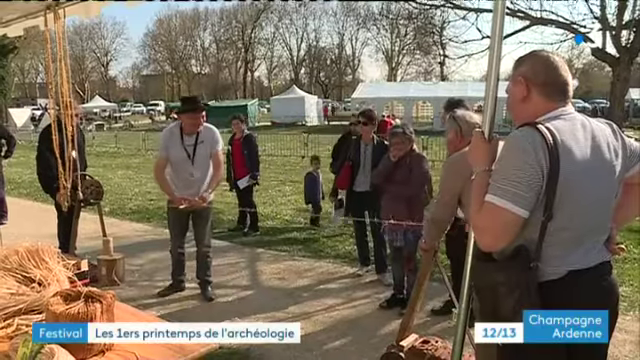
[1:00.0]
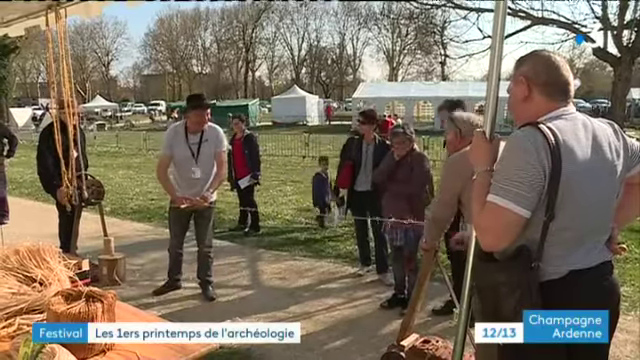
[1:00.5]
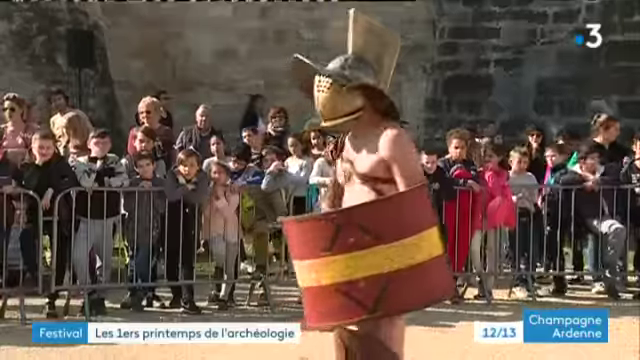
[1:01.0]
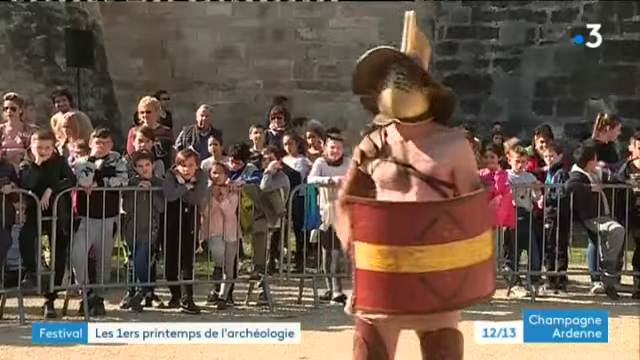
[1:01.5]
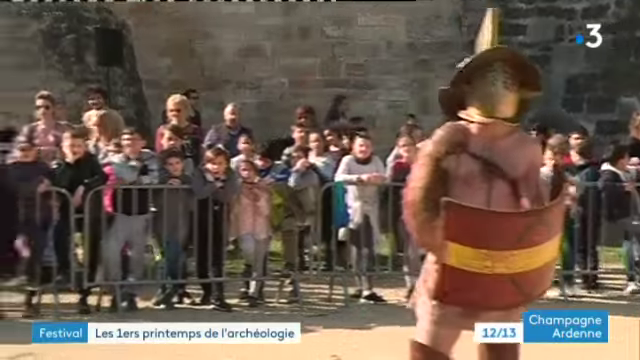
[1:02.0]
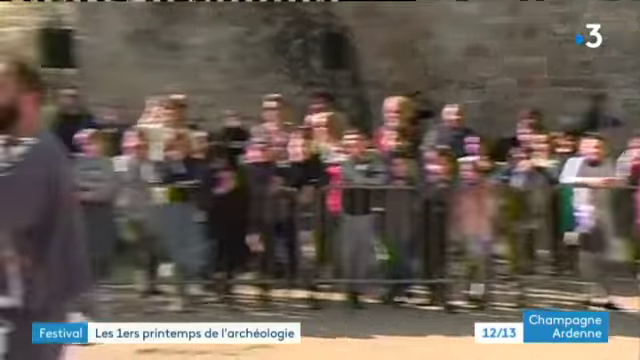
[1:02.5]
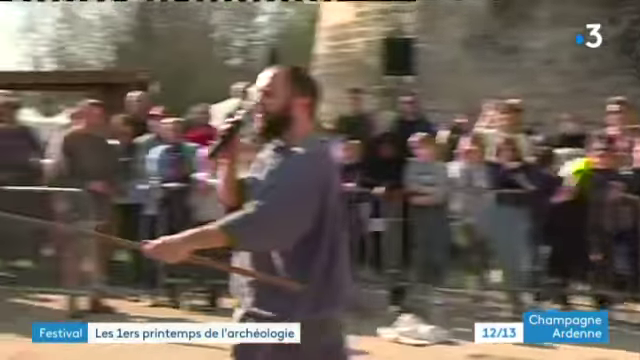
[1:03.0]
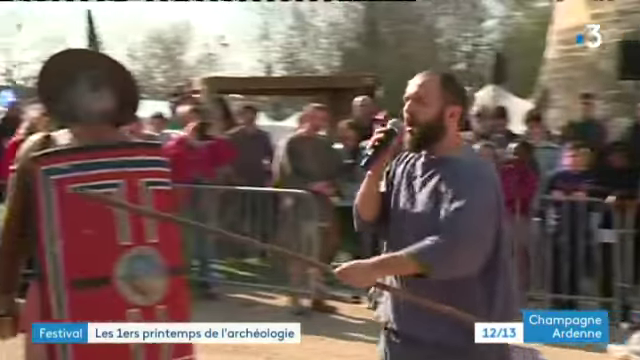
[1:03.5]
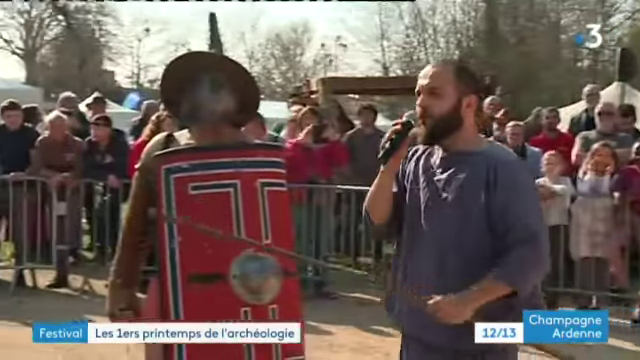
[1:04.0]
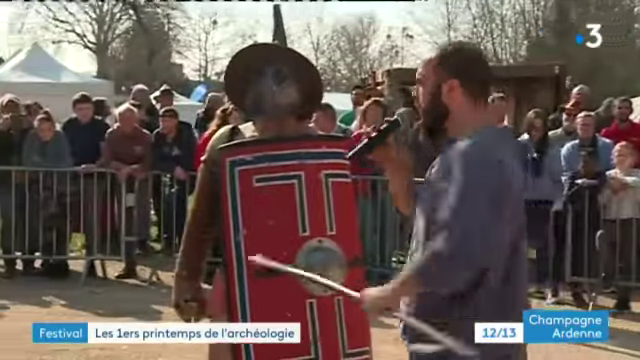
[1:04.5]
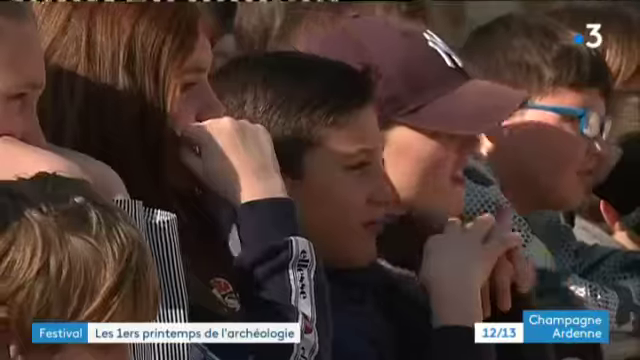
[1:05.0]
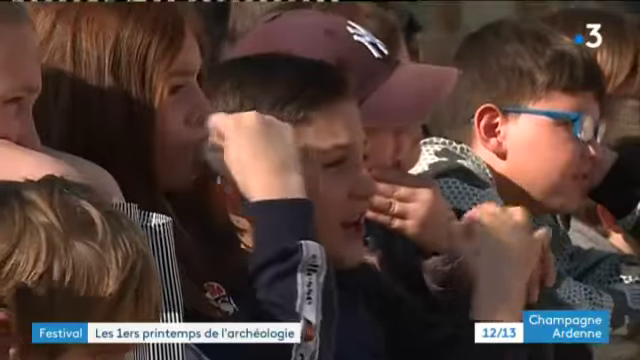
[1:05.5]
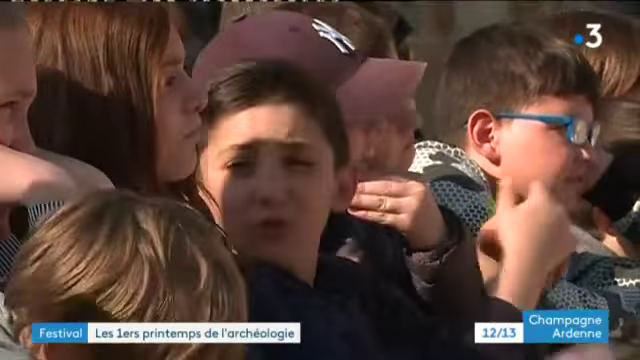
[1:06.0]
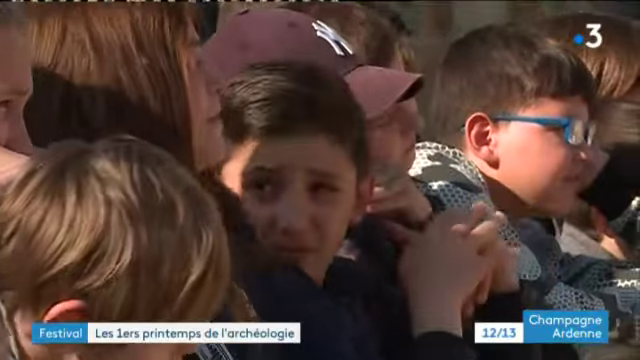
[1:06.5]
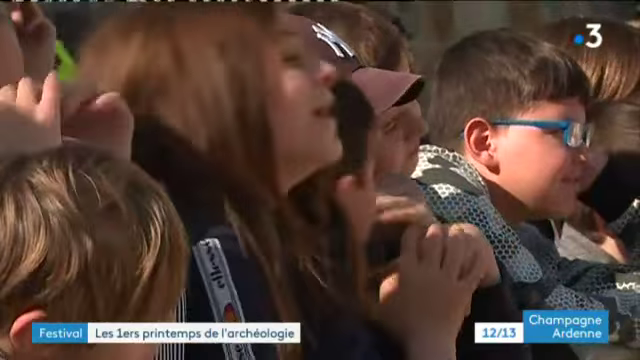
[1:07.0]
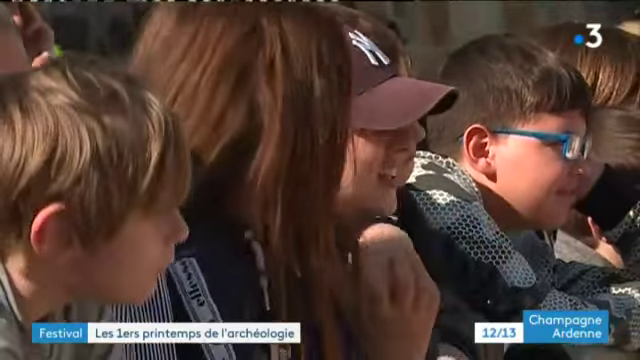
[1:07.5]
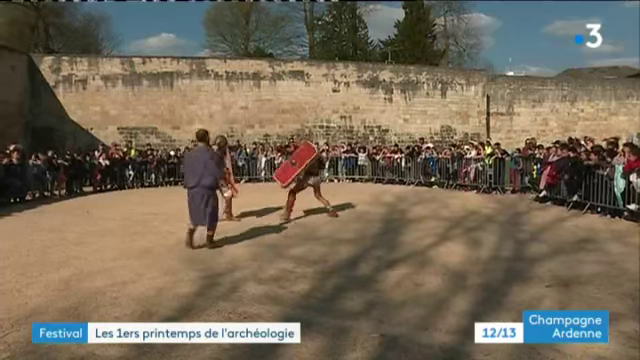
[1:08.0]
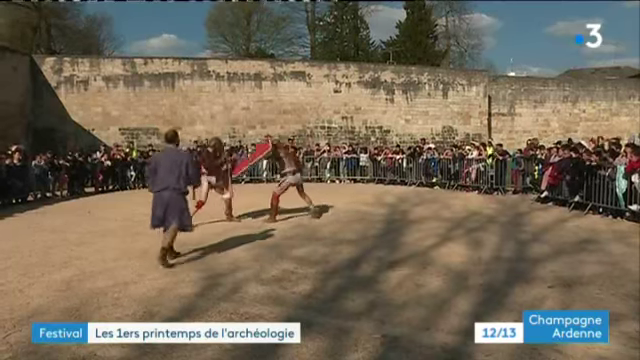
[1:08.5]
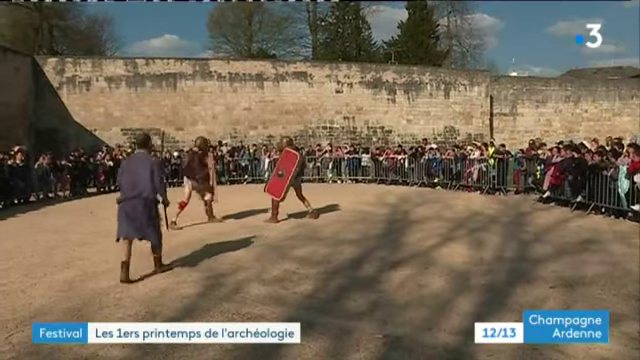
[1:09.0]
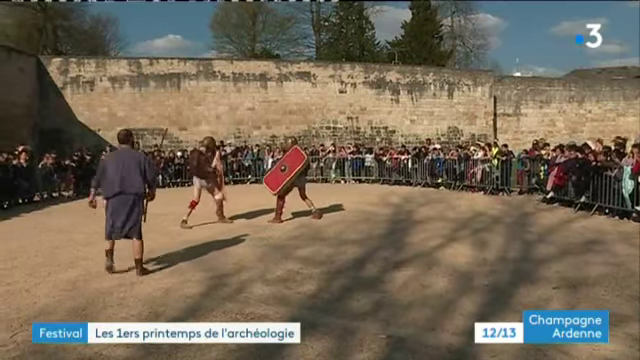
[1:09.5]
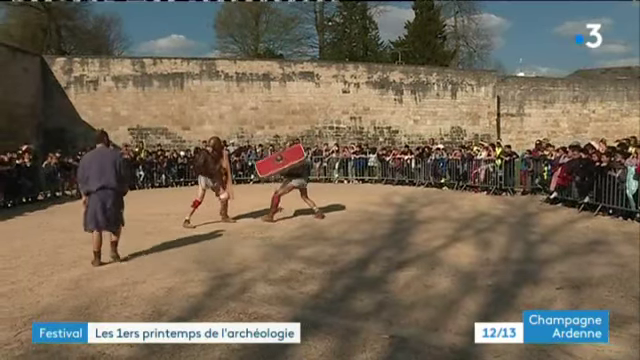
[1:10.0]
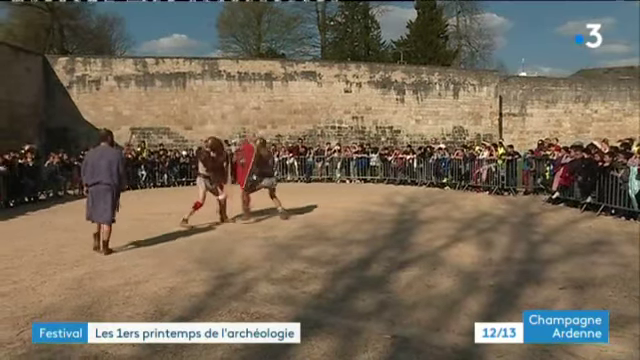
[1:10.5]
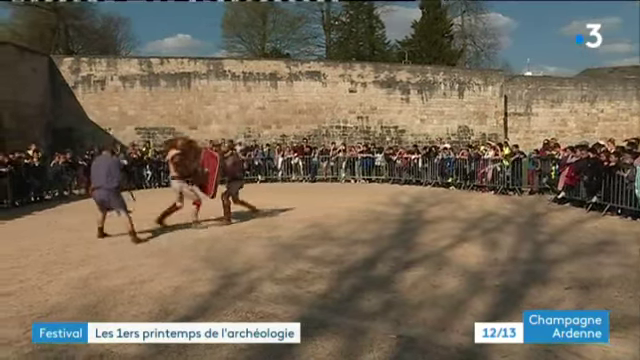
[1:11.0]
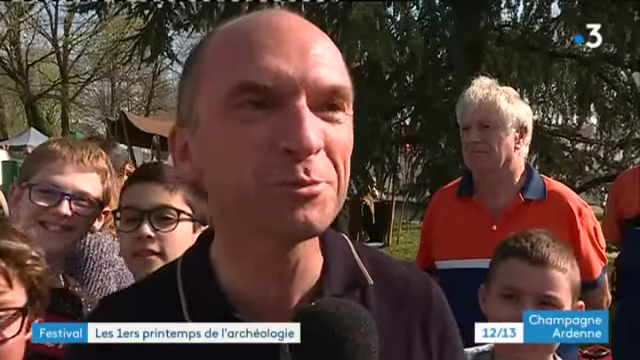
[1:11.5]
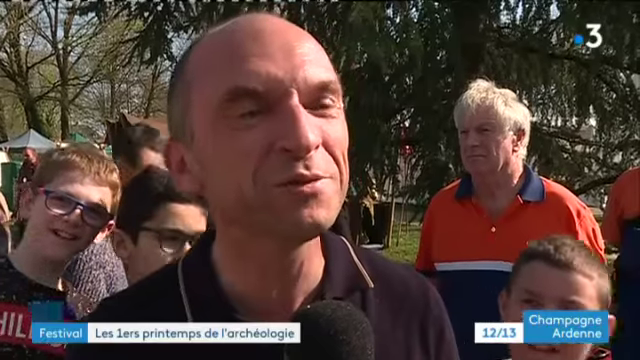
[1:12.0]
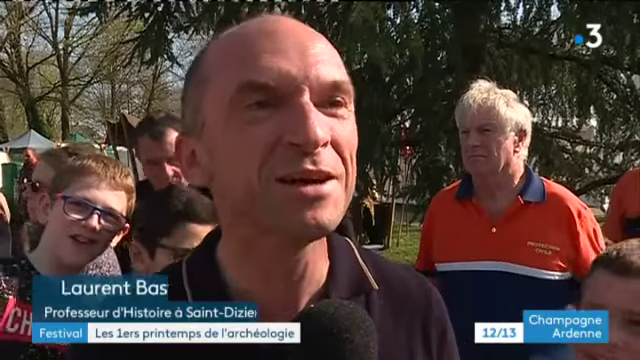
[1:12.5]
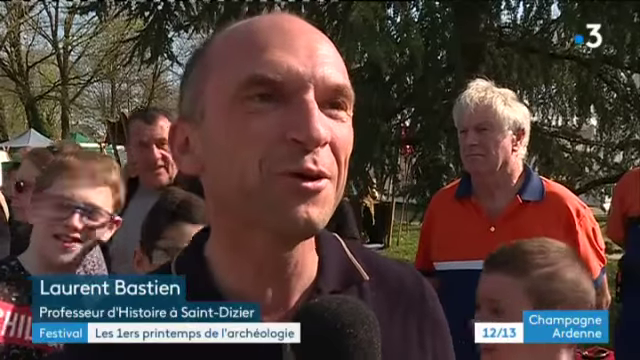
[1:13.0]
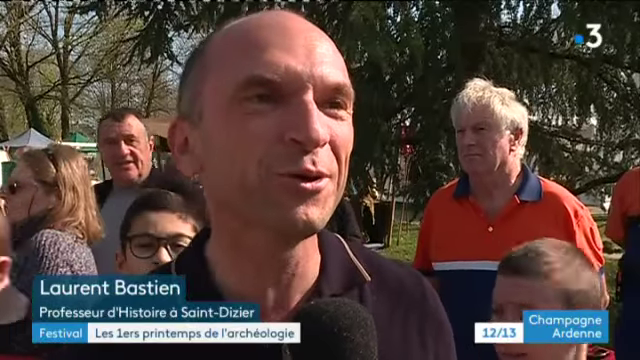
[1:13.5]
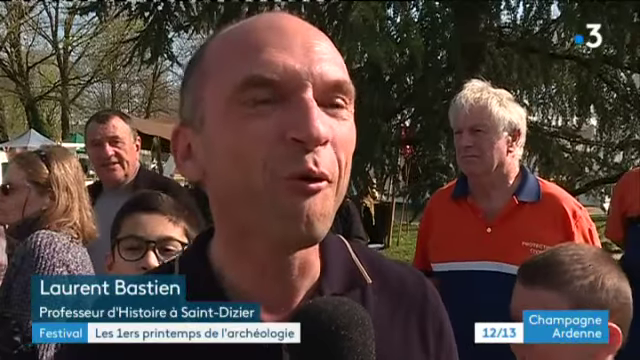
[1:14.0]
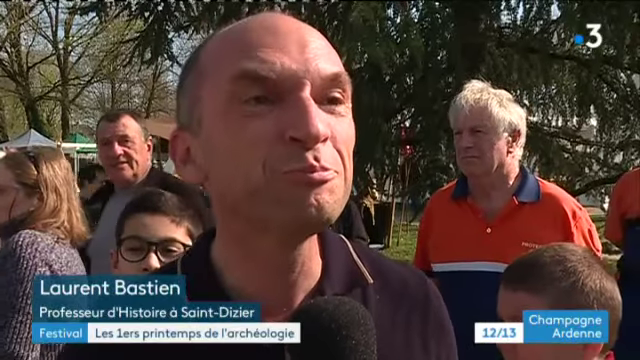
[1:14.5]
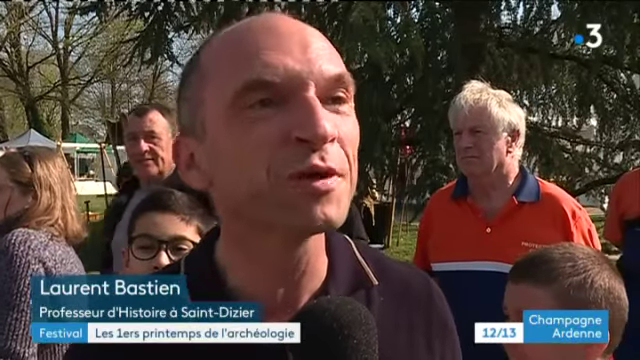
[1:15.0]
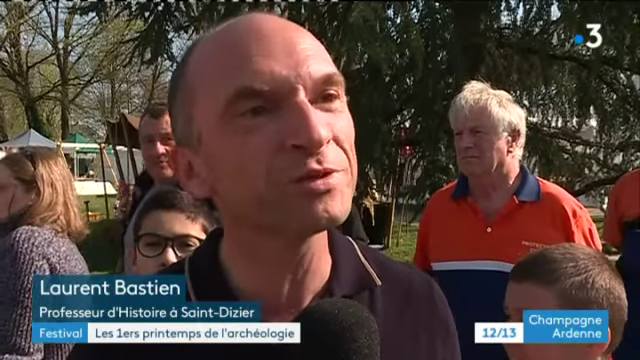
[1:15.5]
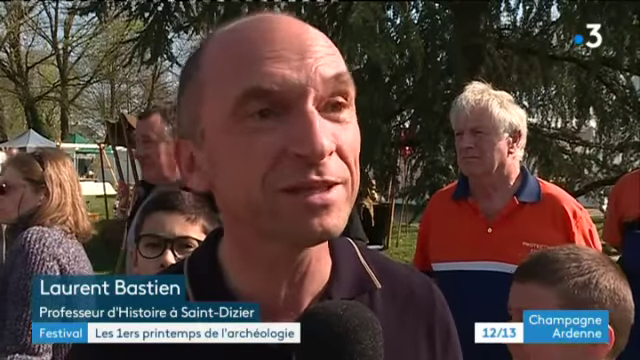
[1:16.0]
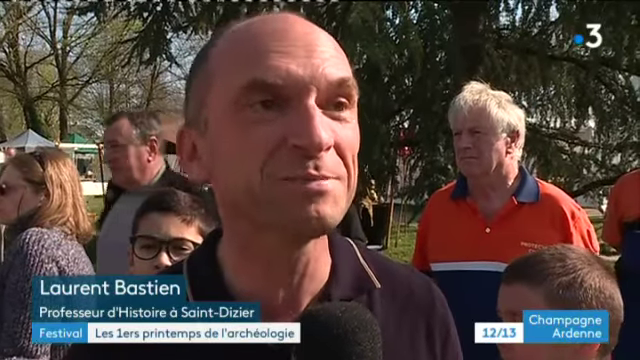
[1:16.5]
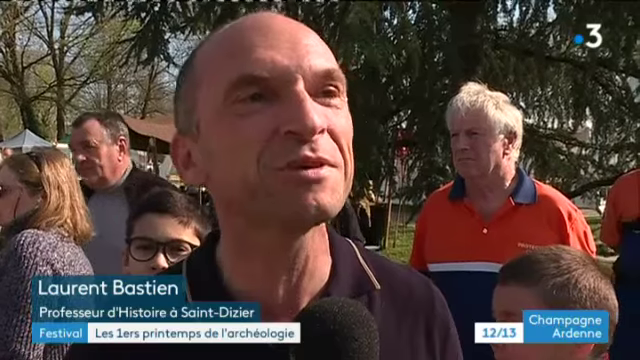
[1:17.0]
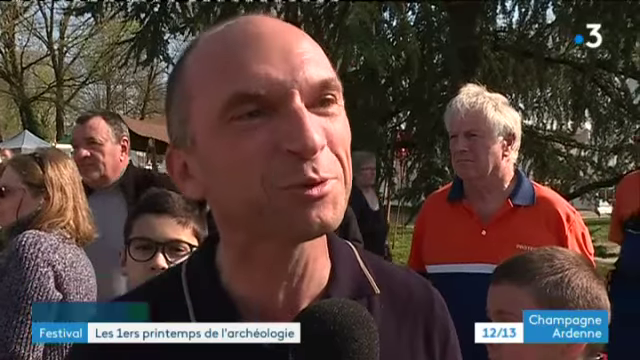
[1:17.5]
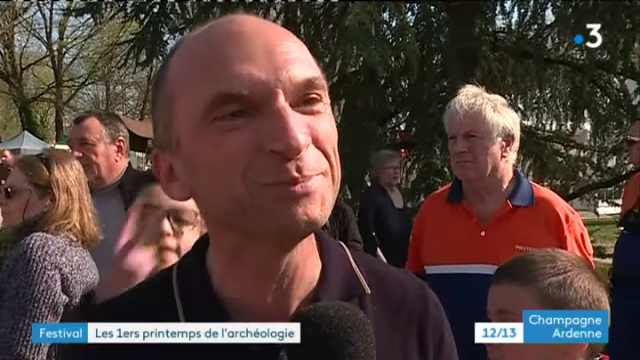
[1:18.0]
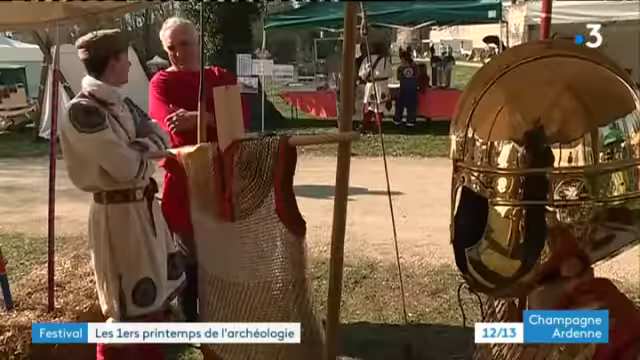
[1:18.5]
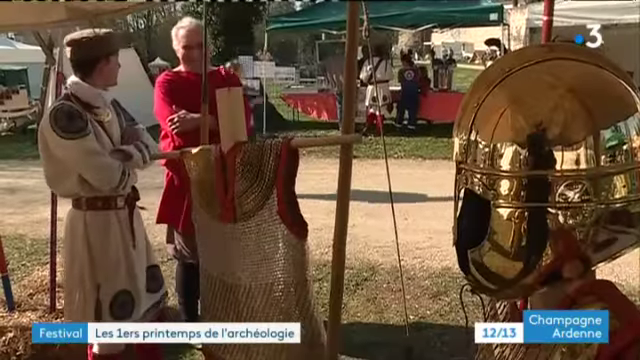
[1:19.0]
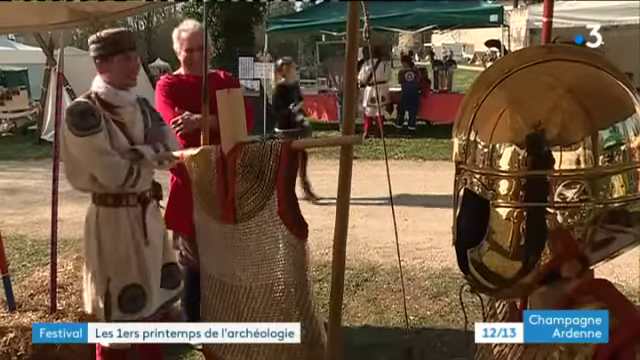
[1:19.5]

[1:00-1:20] Two men stand outside a marquee at the historical event, holding a piece of string between them; it is not clear what they are doing with it. On the right of the screen a man in a grey t-shirt watches them, and in the centre several women and children stand around watching. Next, a large crowd of women and children stands in front of a medieval stone wall, with a fence in front of them separating them from an event that seems to be a recreation of a battle. A shirtless man holds a red rectangular shield with a gold stripe through the middle; he has a leather strap across his chest and a metal shield and helmet covering his face. The camera pans left to a man in a grey tunic holding a long stick and talking into a microphone. He walks towards a man on the left of the screen who also wears a mask and pointed helmet and holds a large cylindrical red shield. A shot follows of six or seven children watching. Then, from further back, the two men with the shields fight each other in the centre of the screen, with the crowd gathered in a semi-circle around the area and a medieval wall behind the crowd. Next, a bald man in a black shirt talks directly to a reporter behind the camera, while behind him a couple of men and two or three children stand watching. His name, "Laurent Bastien", appears in white text over a blue rectangle in the lower left corner.